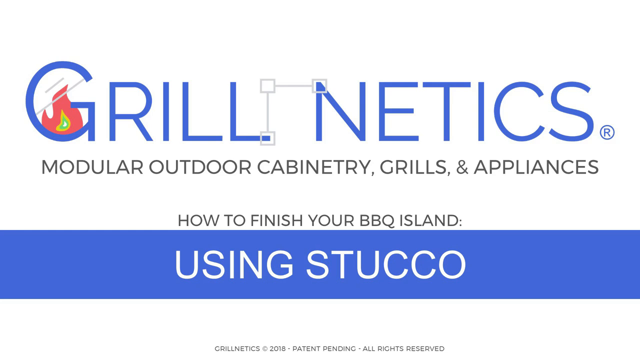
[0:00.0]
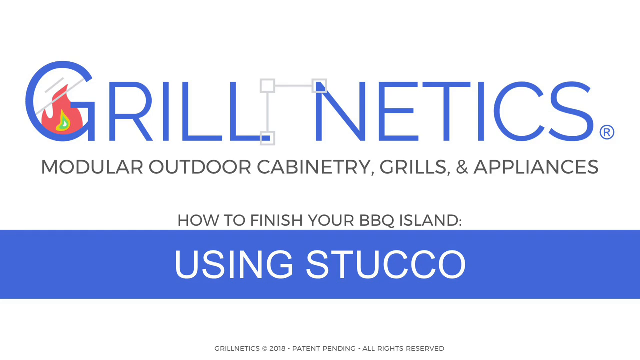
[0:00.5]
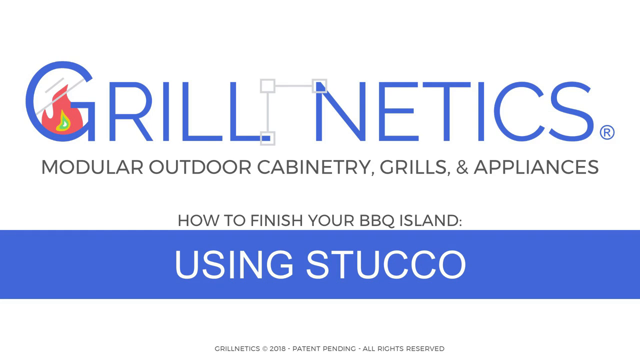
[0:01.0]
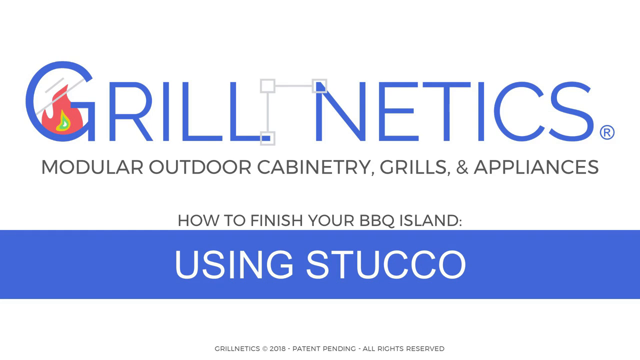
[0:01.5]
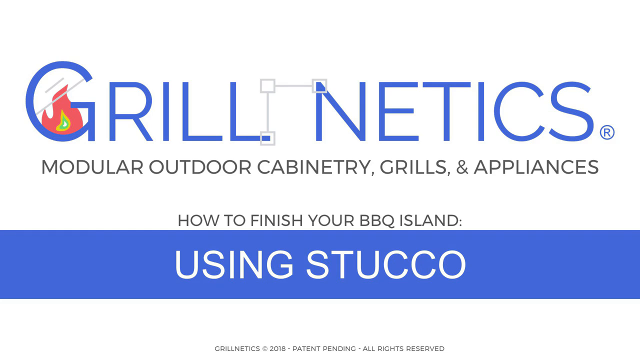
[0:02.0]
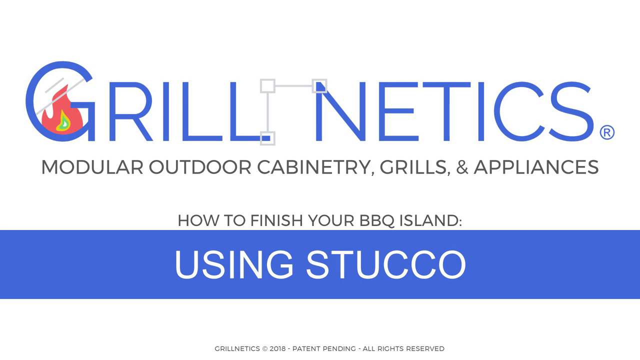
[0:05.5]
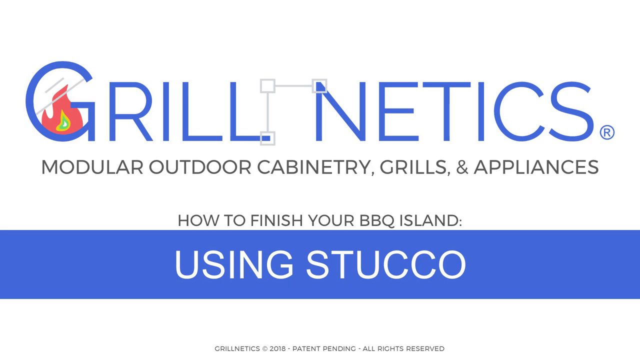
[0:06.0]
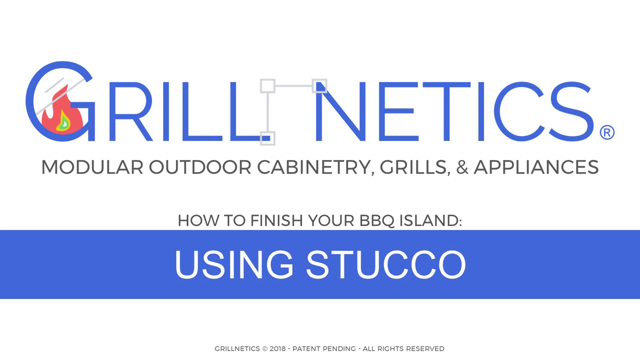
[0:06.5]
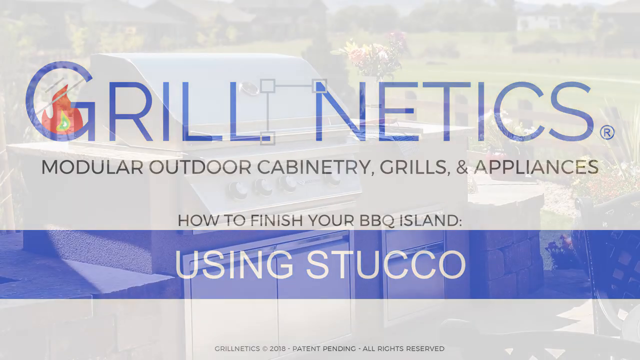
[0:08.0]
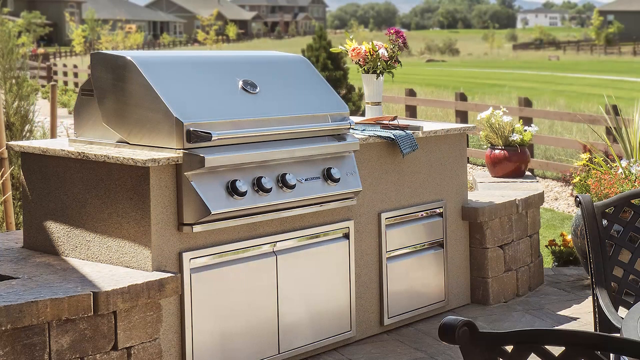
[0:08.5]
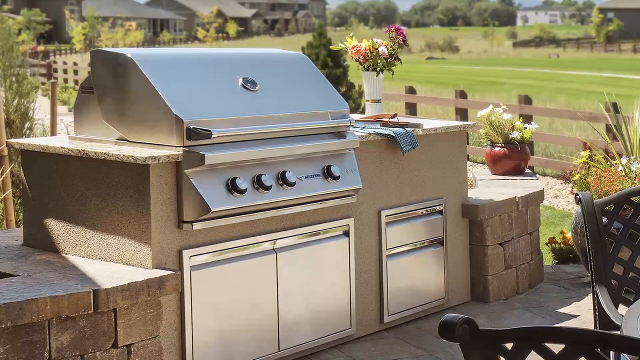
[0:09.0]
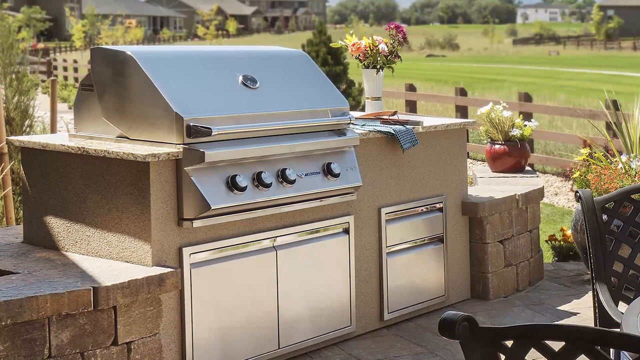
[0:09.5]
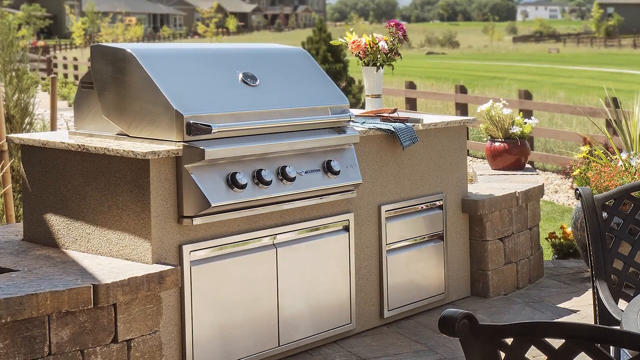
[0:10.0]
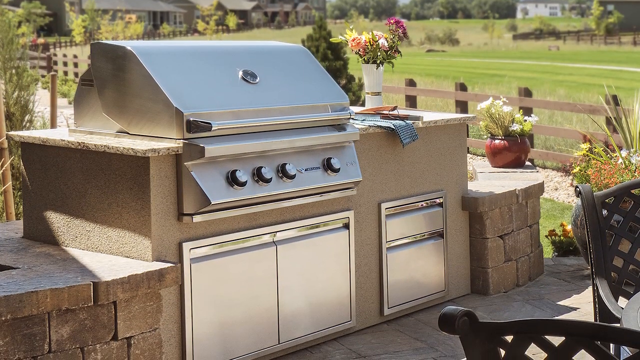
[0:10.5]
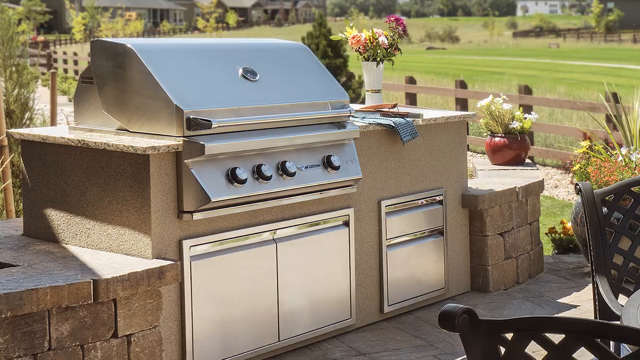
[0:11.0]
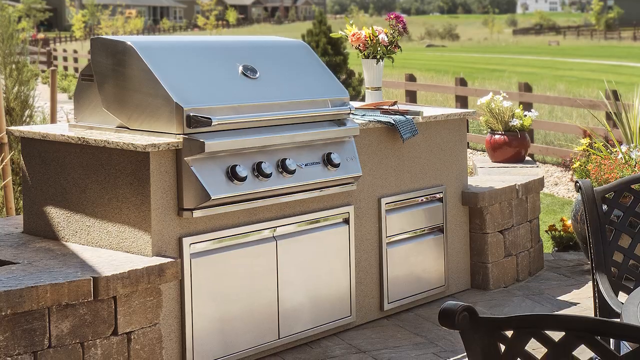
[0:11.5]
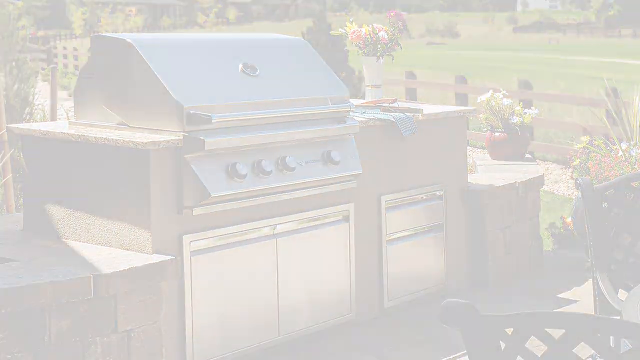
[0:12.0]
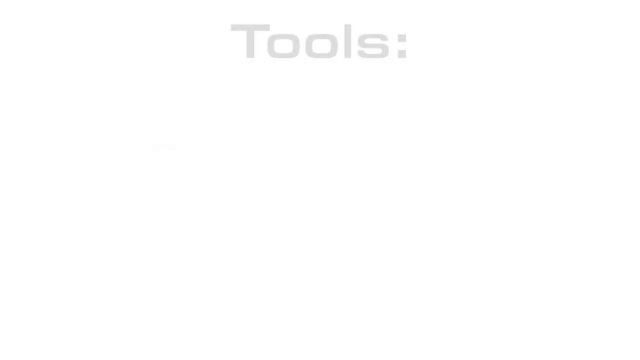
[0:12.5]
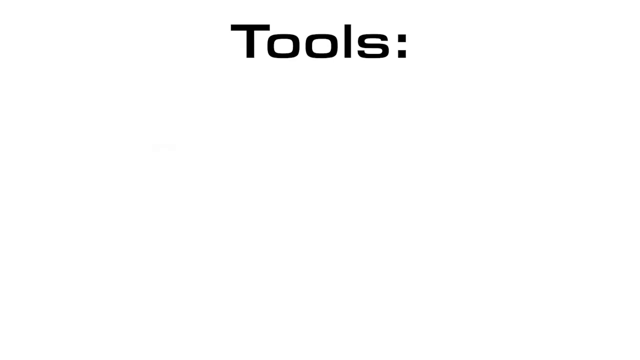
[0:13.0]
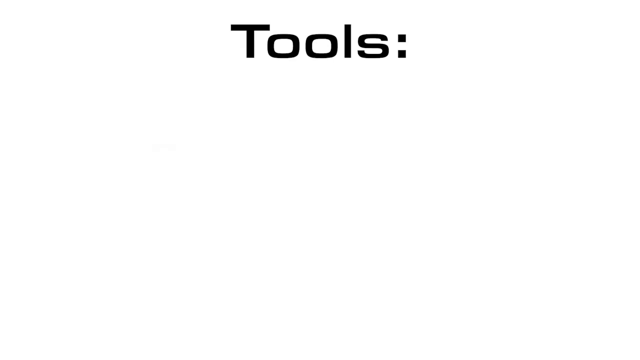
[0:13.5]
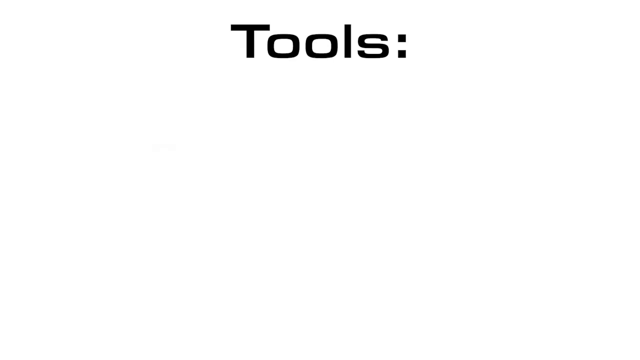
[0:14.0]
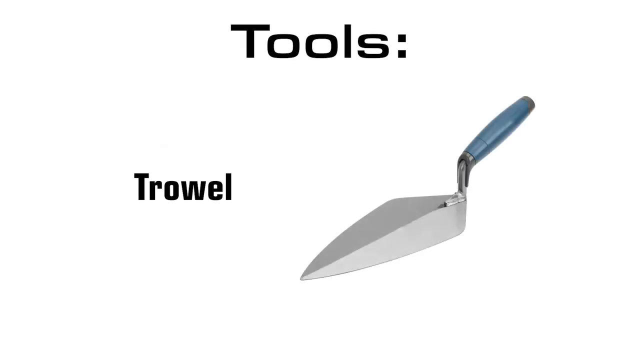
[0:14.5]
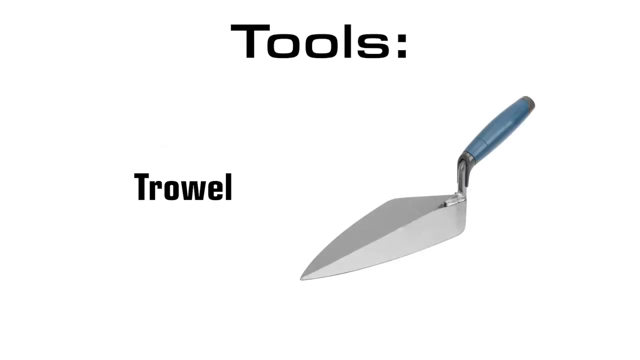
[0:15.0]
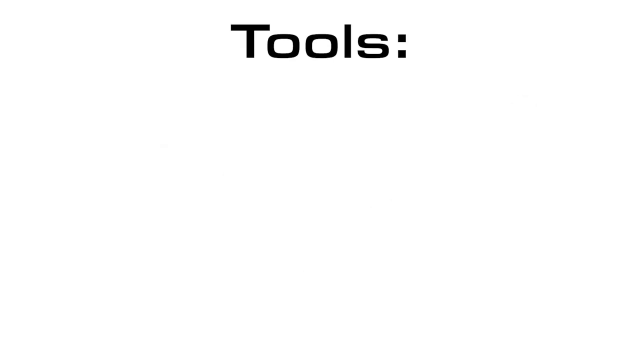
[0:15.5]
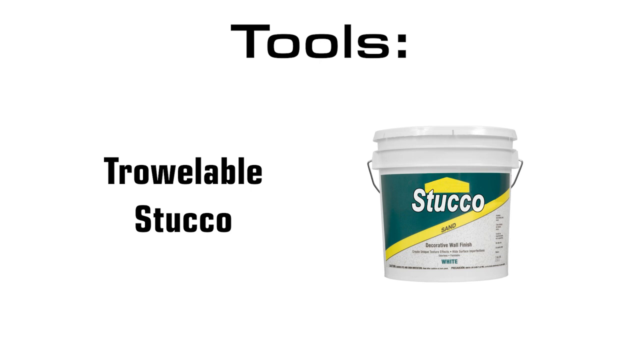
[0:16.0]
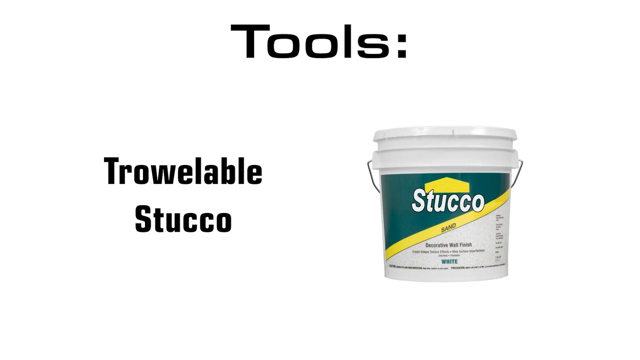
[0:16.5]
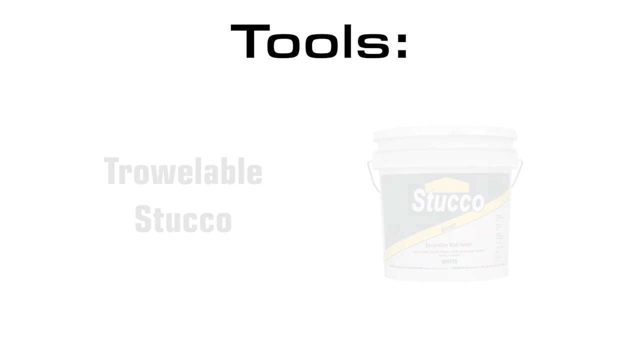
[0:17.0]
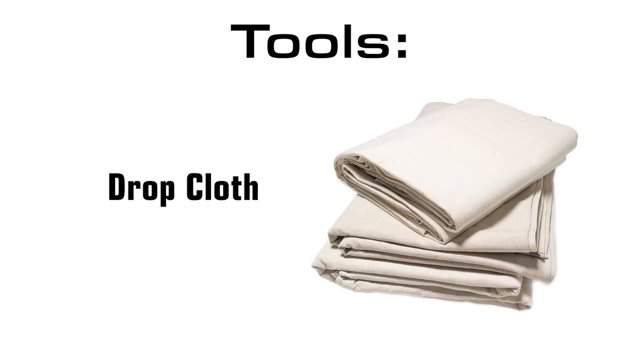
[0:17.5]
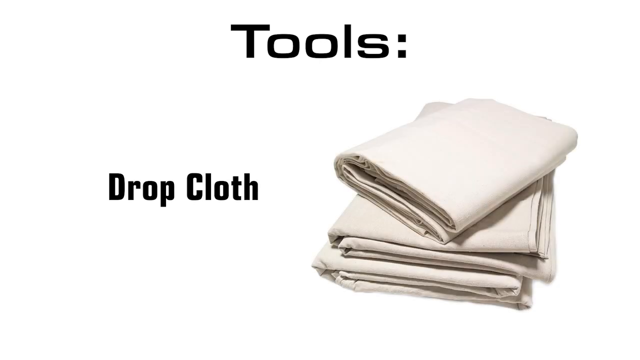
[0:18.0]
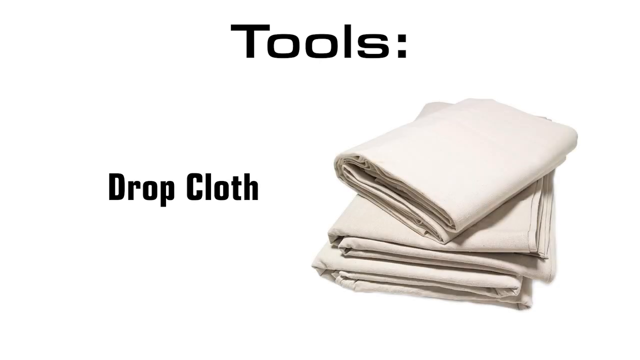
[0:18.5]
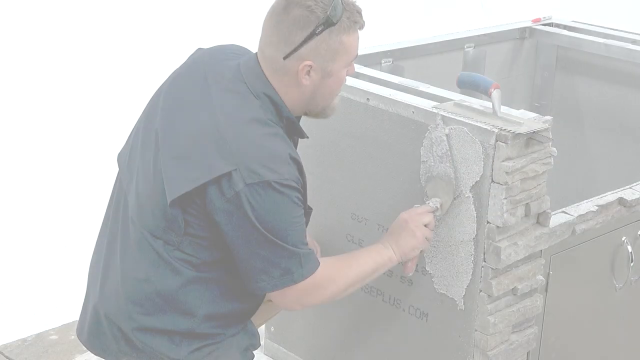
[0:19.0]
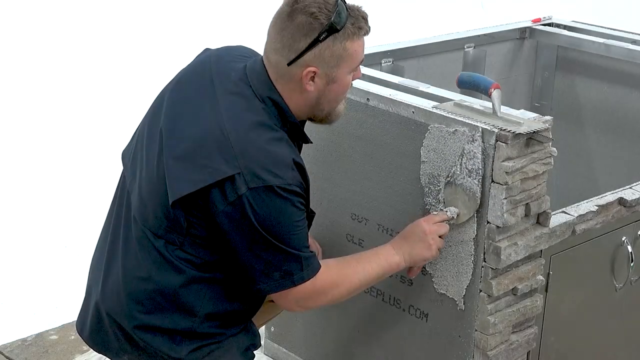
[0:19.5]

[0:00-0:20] A website displays the name "Grill netics" in blue writing. Between the L and the N there are two faint, connected boxes. Text reads "modular outdoor cabinetry, grills & appliances." A beautiful outdoor grill enclosed in a fence appears next. The opening page reads "how to finish your barbecue island using stucco." A page lists the tools needed, including a trowel, trowelable stucco and a drop cloth. A man is shown doing the job; he has sunglasses on top of his head and holds a trowel, a silver instrument, which he uses to spread concrete on the side of a wall, finishing a barbecue island by putting concrete on the side and smoothing it out.